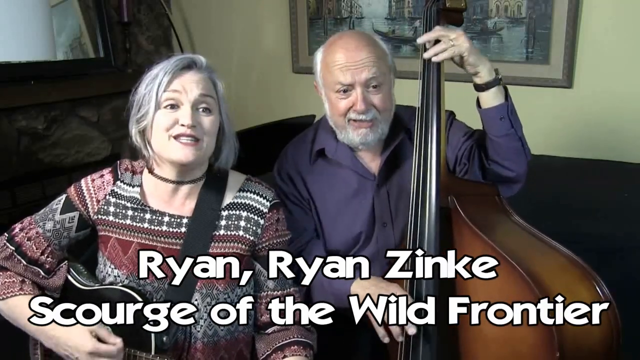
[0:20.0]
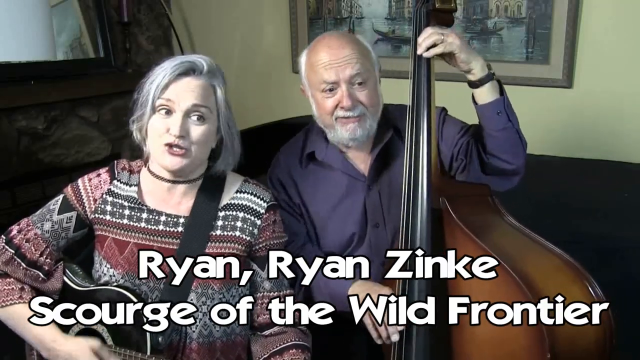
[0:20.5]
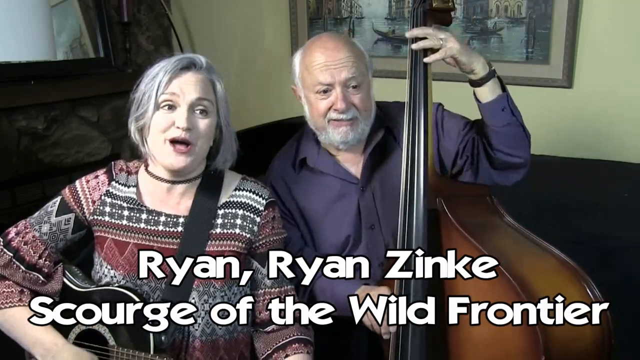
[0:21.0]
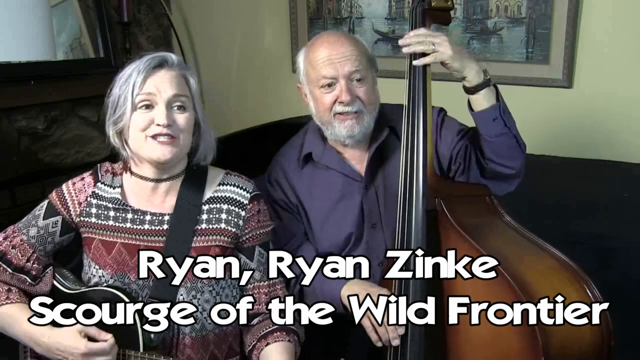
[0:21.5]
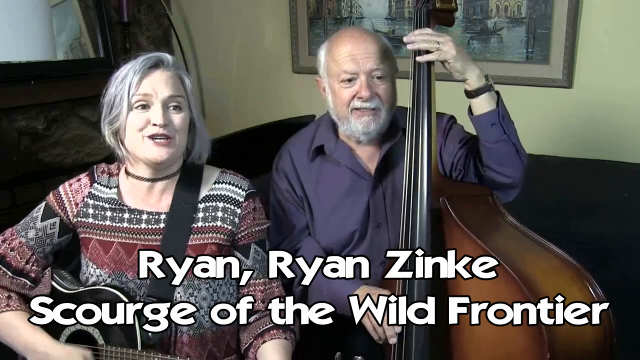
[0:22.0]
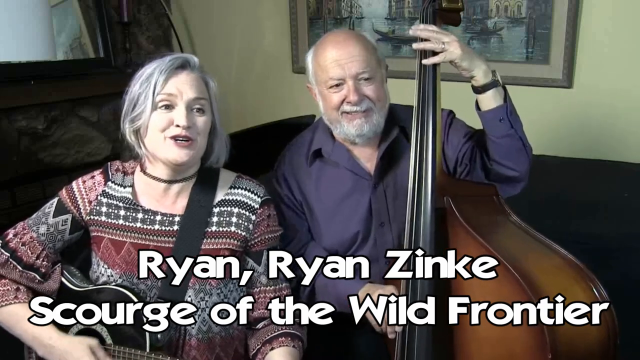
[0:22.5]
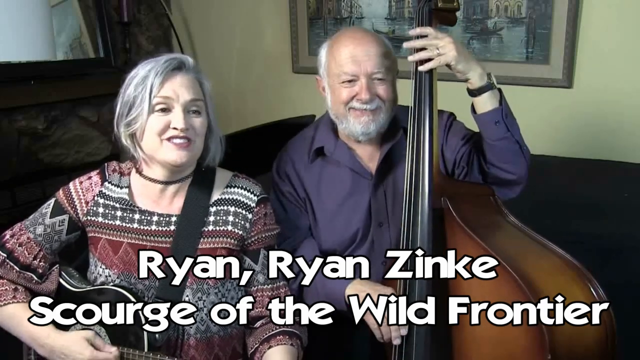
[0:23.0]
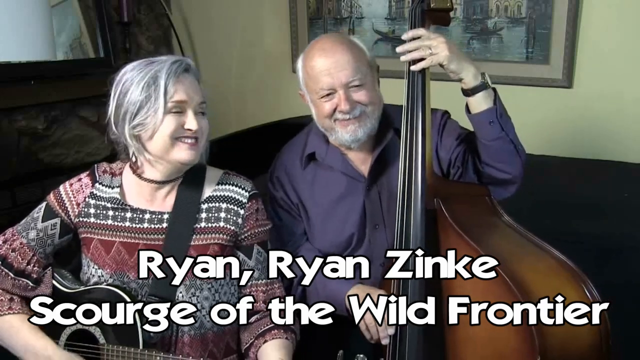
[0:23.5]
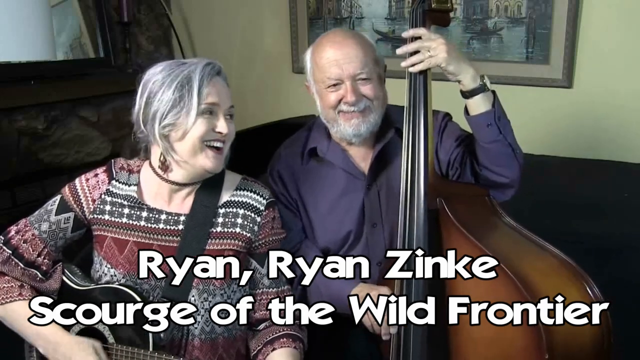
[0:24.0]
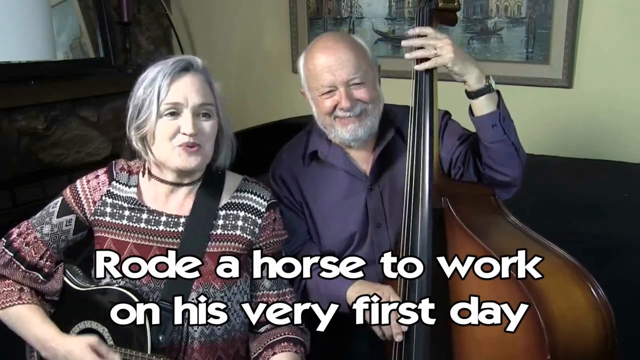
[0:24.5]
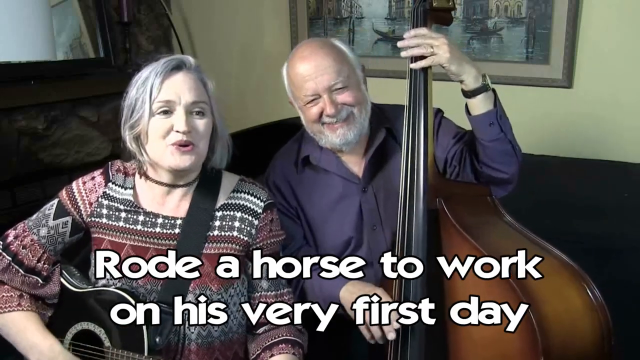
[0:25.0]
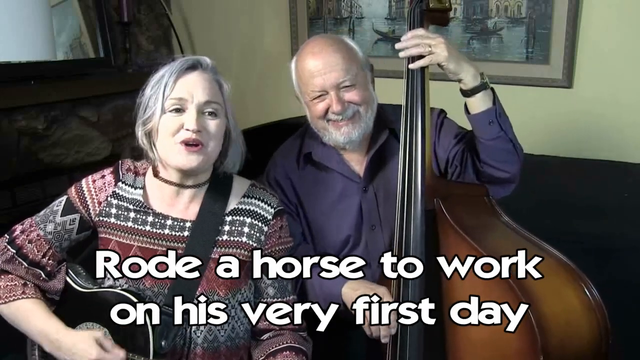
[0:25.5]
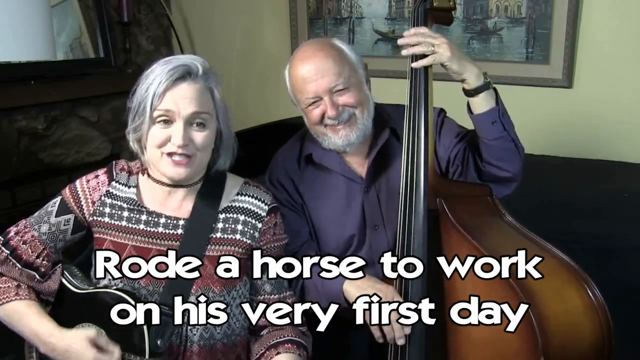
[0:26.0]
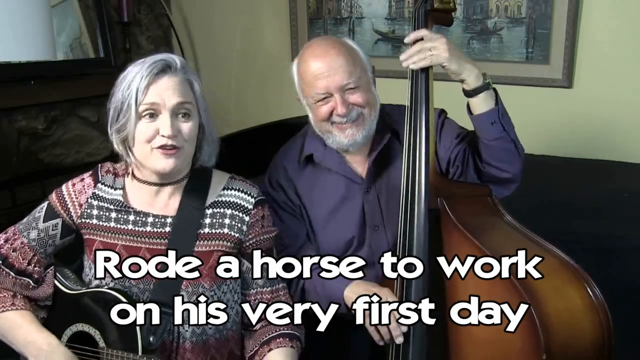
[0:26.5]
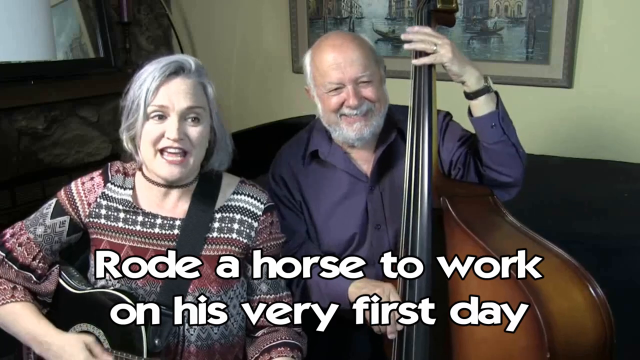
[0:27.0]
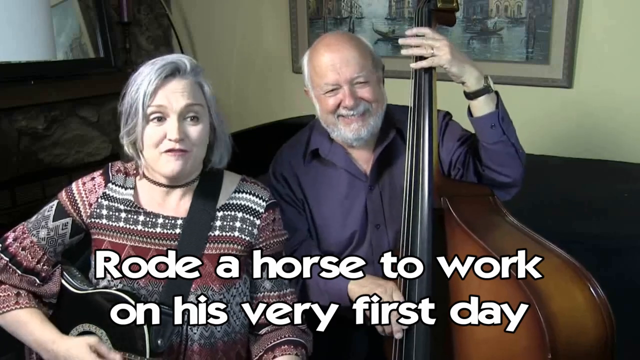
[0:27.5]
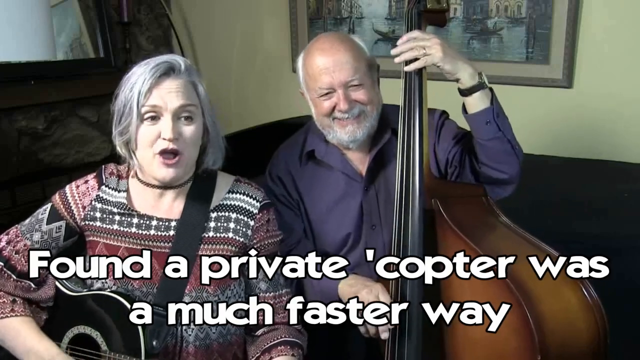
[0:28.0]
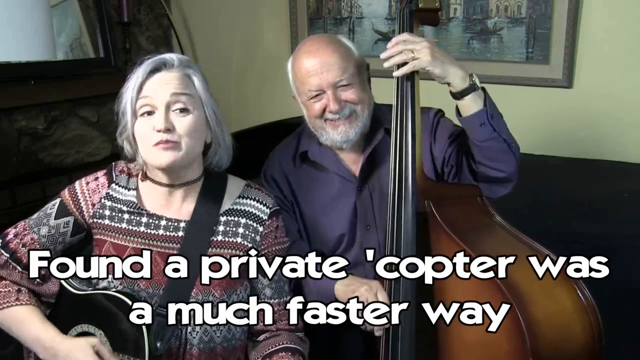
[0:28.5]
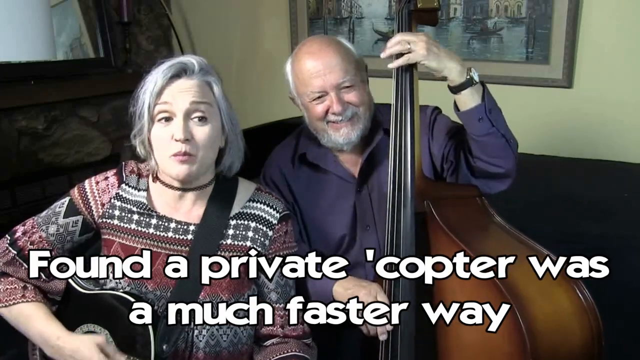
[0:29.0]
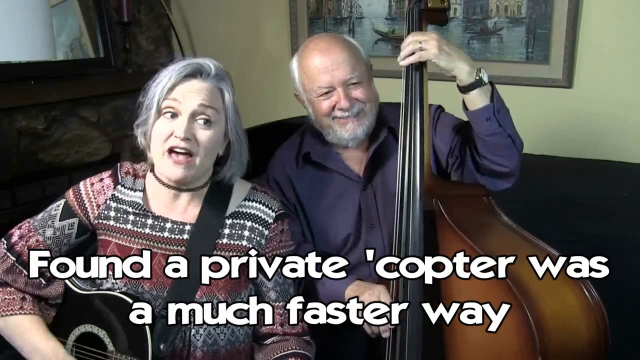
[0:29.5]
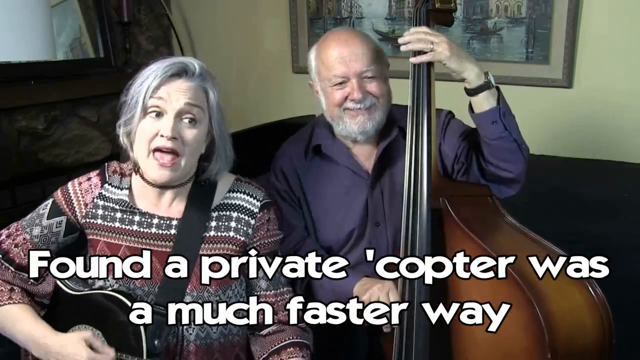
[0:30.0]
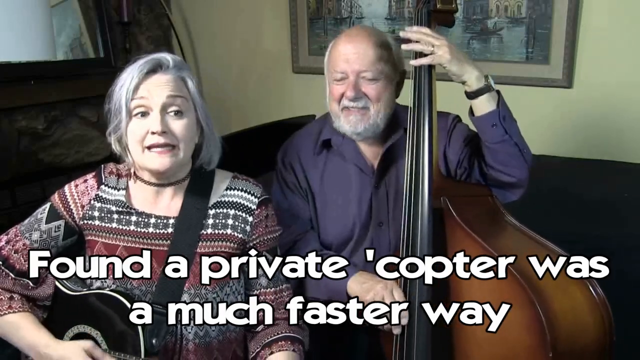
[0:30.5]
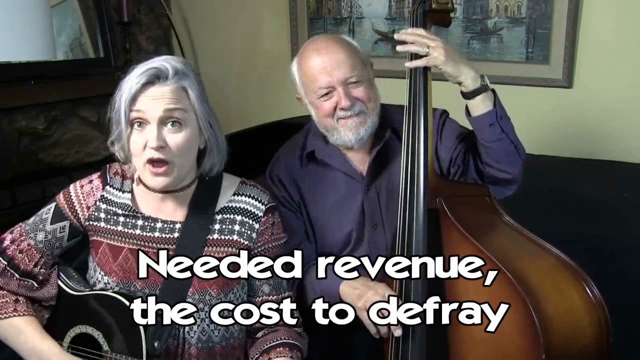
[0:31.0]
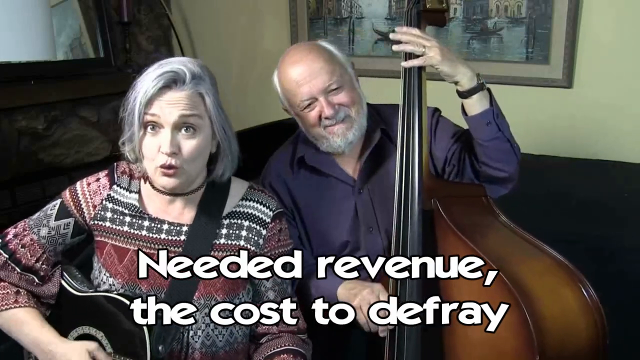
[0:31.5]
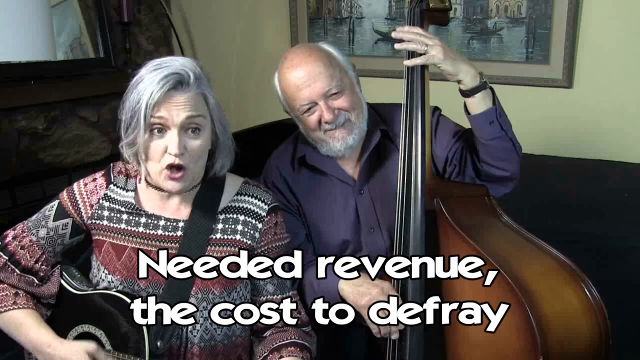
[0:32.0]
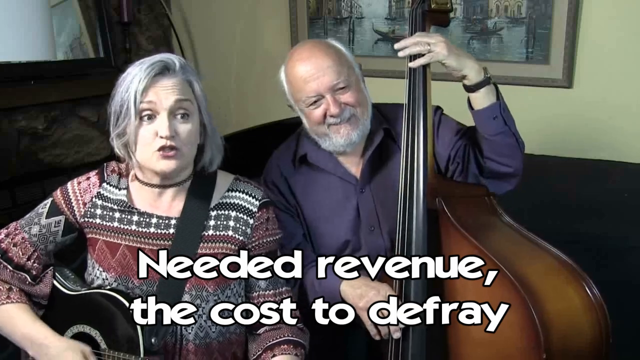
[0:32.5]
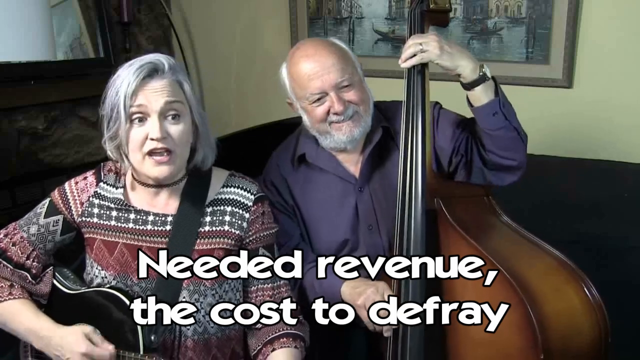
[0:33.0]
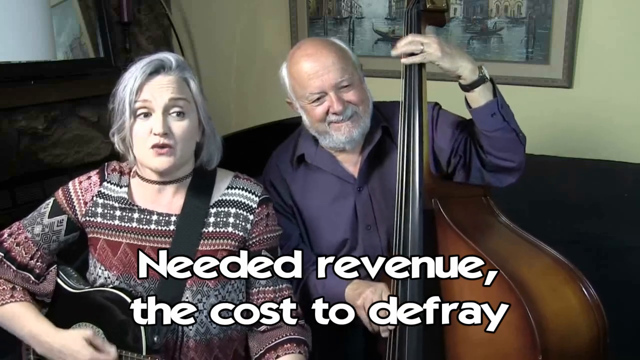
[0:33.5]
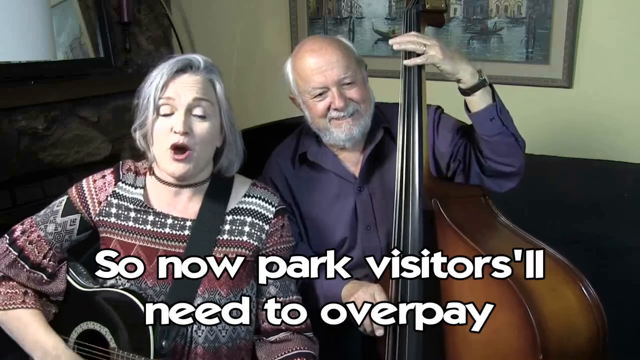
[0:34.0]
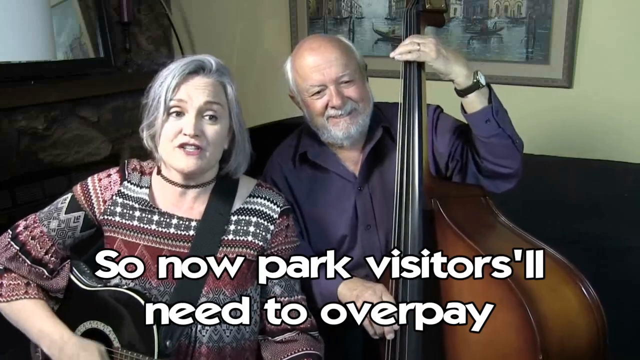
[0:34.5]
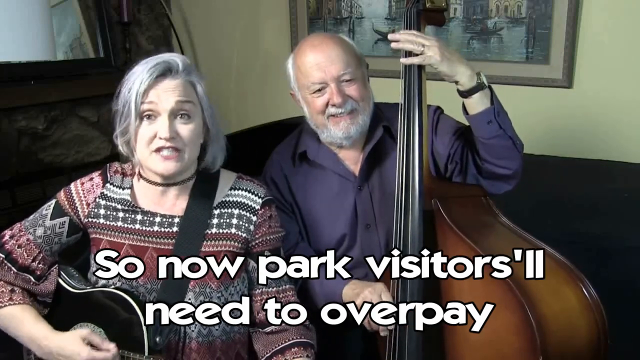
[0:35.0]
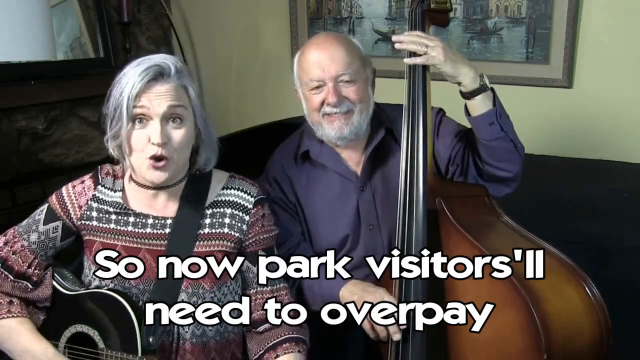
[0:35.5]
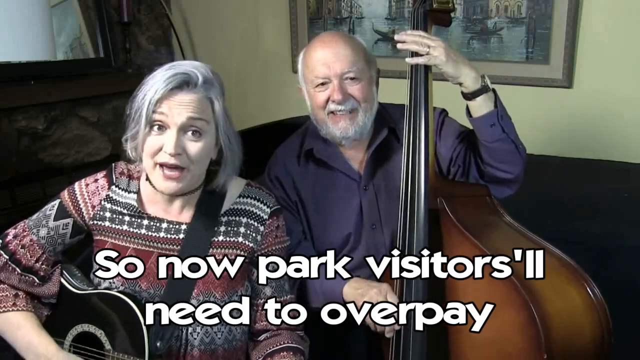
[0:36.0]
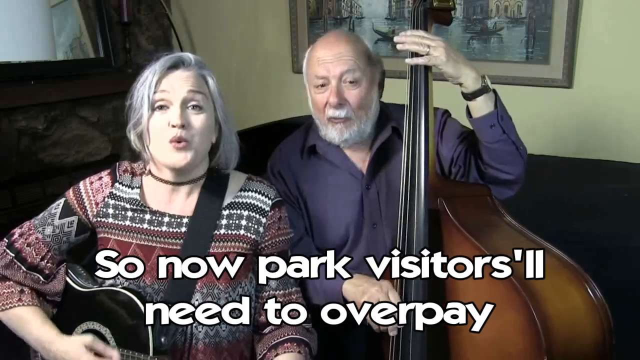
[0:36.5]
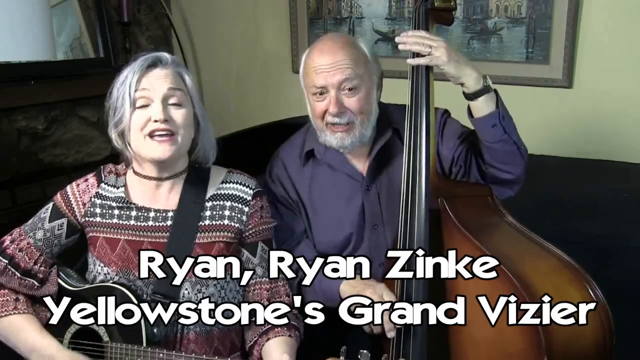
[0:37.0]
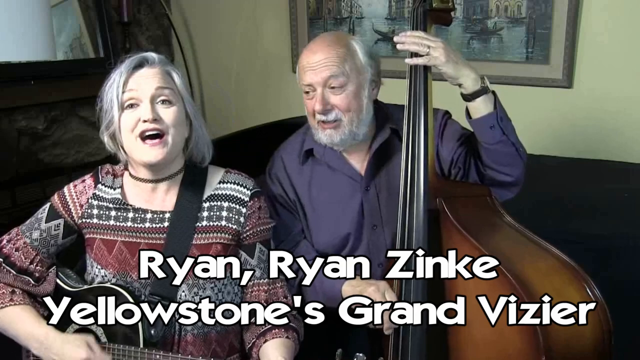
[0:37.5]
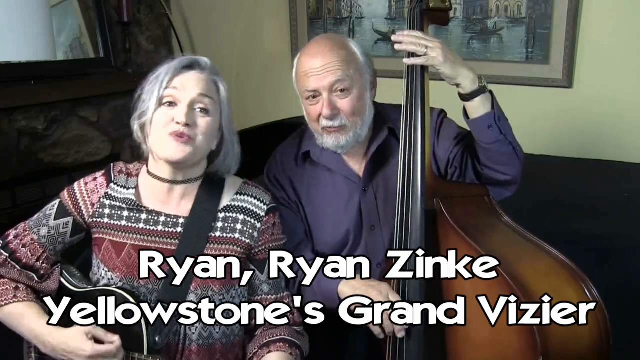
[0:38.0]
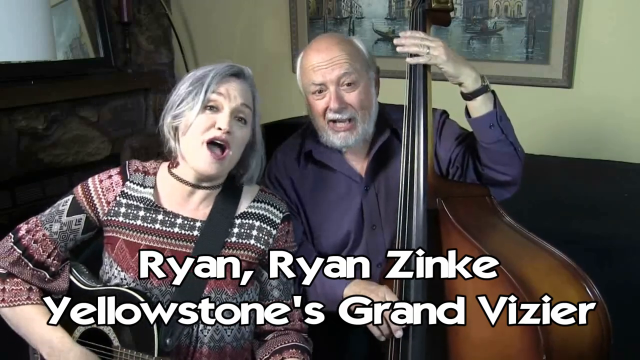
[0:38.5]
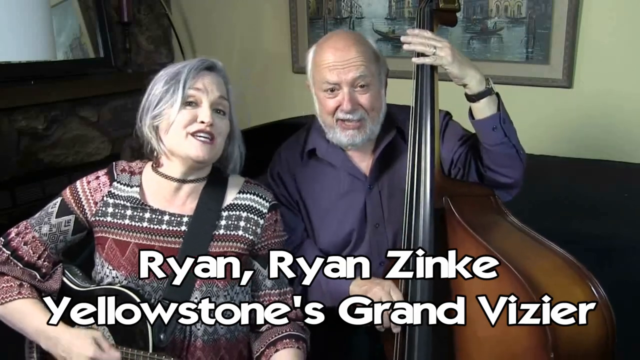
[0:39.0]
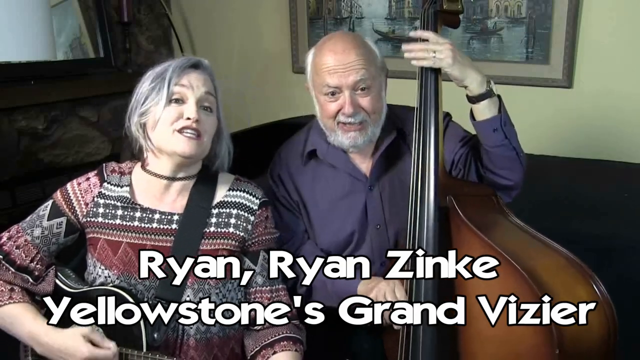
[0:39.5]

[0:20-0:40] The same two people continue singing, the woman with the guitar and the man with the stand-up bass. The subtitles read "Hike through the Arctic, only got a chill / Didn't see a thing that inspired a thrill / Told Big Oil, don't you worry about a spill / As Stormy said to Donald, drill, baby, drill", followed by "Rode a horse to work on his very first day / Found a private copter, needed revenue, the cost to defray / So now park visitors need to overpay". The man wears a lavender button-down shirt and a watch on his left arm, the arm that is above. The woman has a necklace and a multicolored shirt with more of a New Mexico Albuquerque pattern. The background is a living-room-style setting with a creamy teal wall and a picture on the wall. On the left side is what appears to be maybe a window, and a brick rock wall.